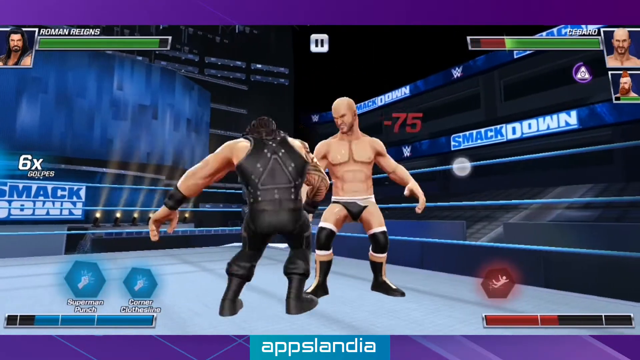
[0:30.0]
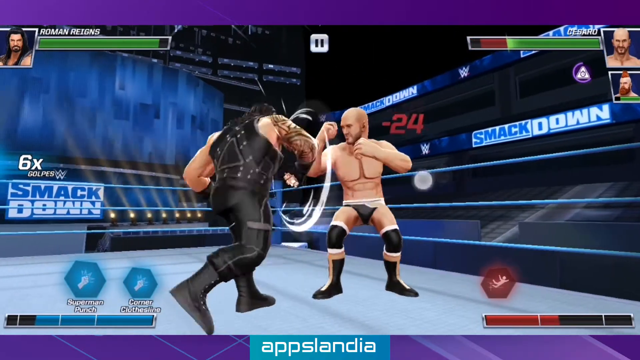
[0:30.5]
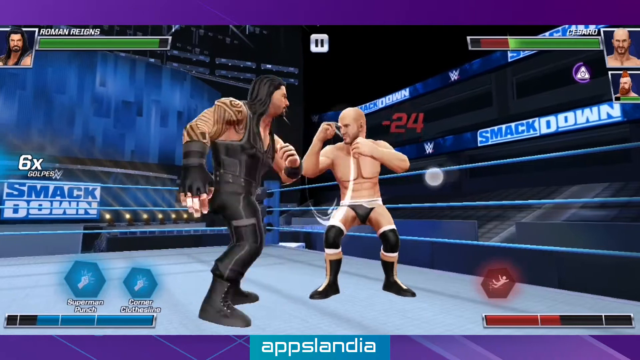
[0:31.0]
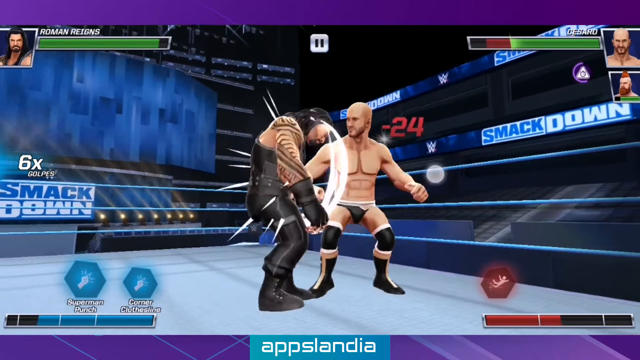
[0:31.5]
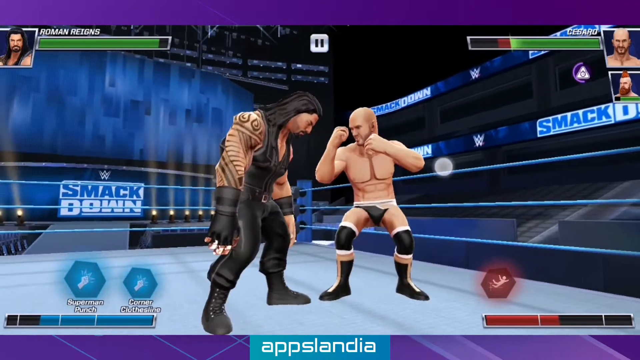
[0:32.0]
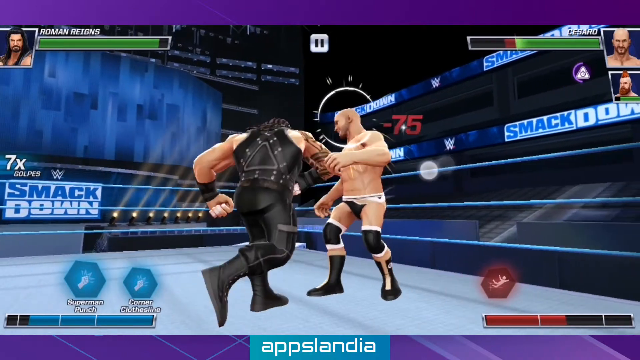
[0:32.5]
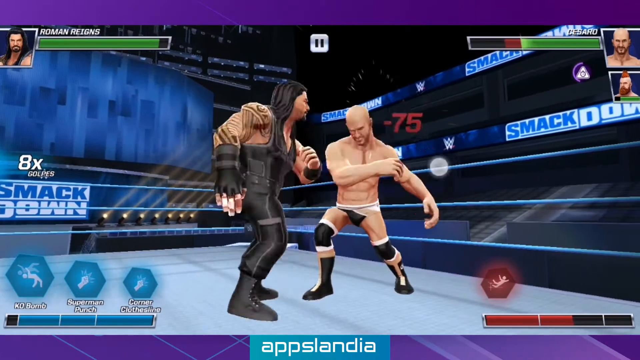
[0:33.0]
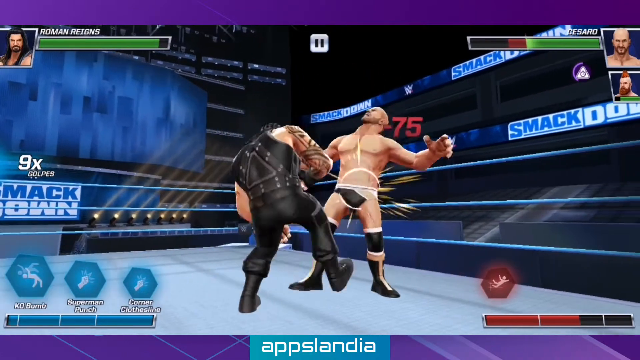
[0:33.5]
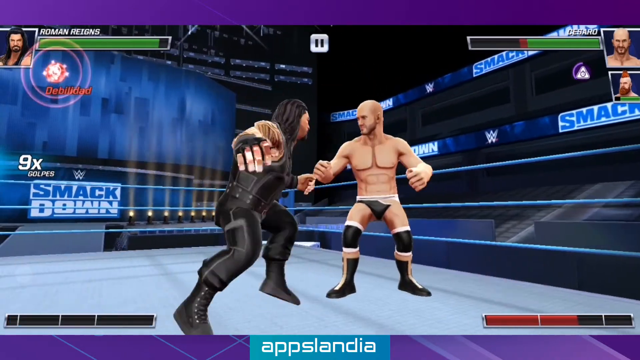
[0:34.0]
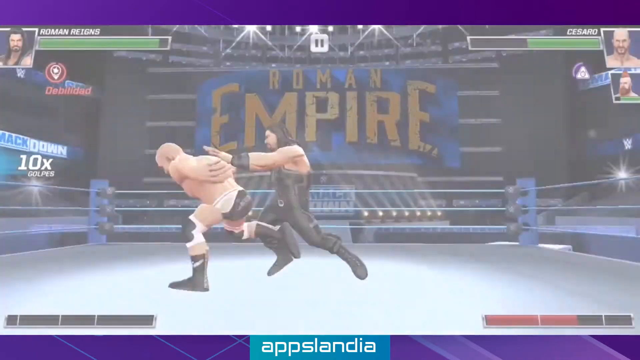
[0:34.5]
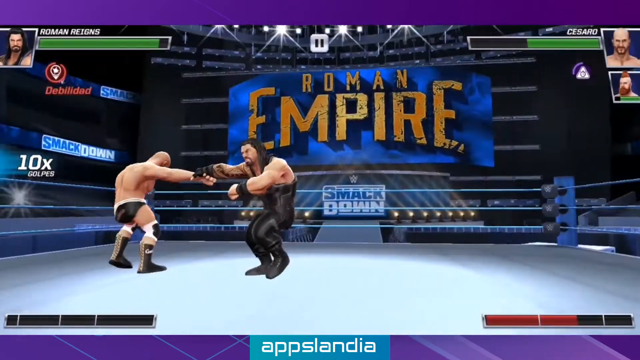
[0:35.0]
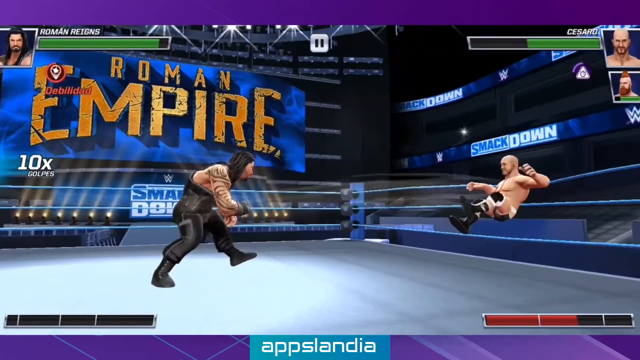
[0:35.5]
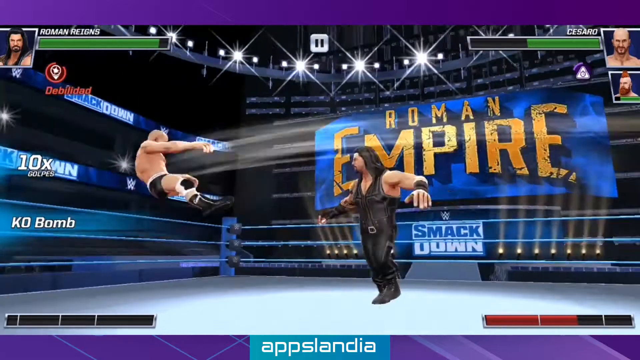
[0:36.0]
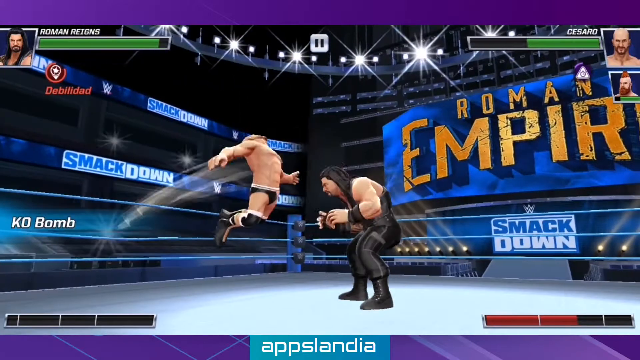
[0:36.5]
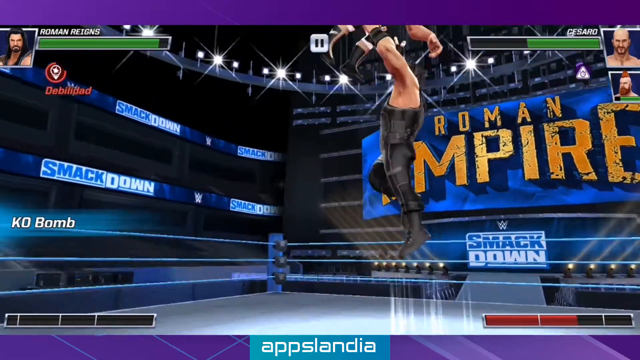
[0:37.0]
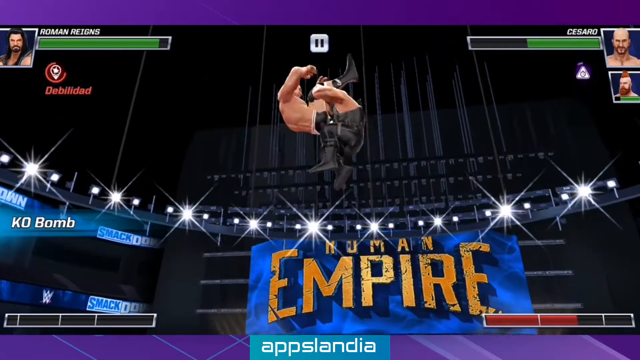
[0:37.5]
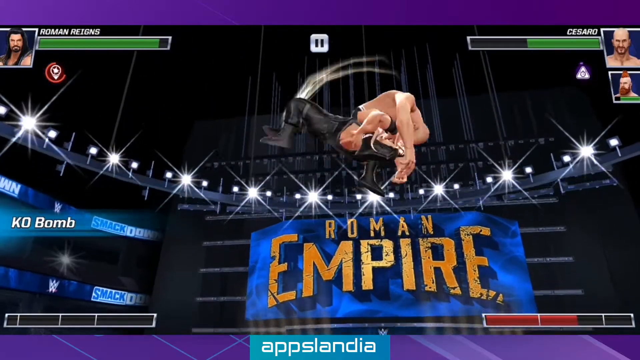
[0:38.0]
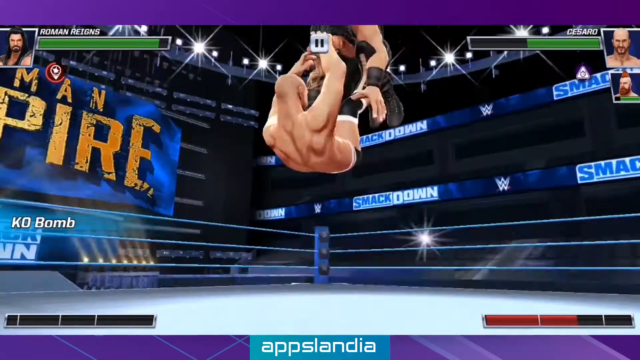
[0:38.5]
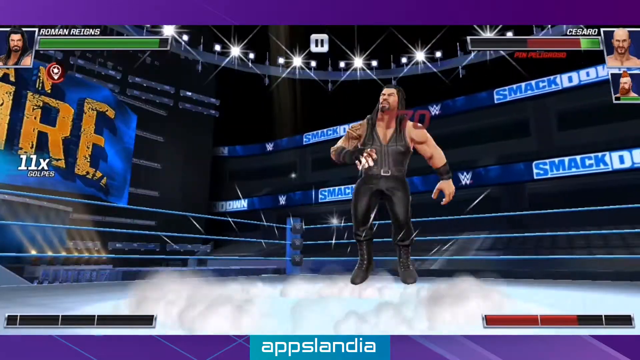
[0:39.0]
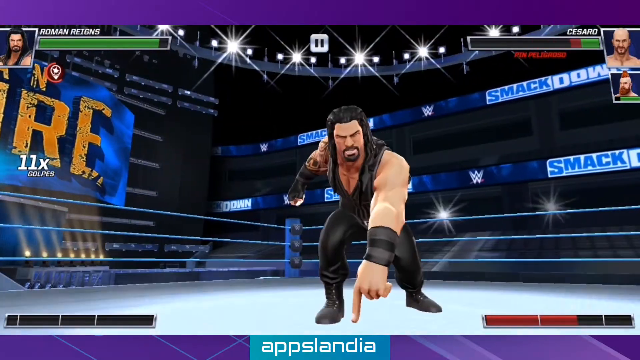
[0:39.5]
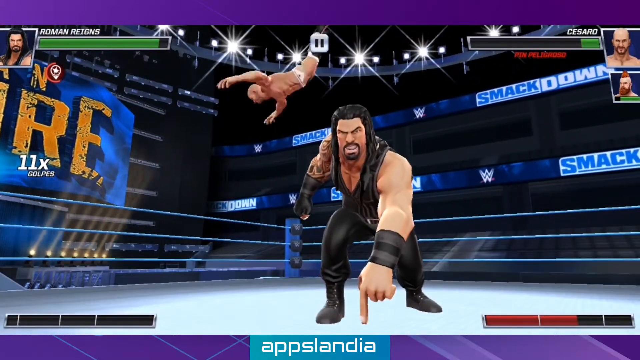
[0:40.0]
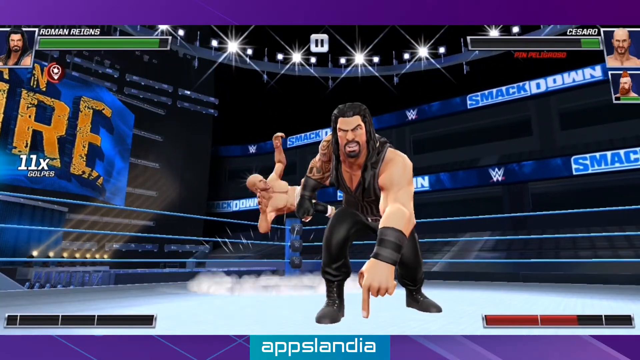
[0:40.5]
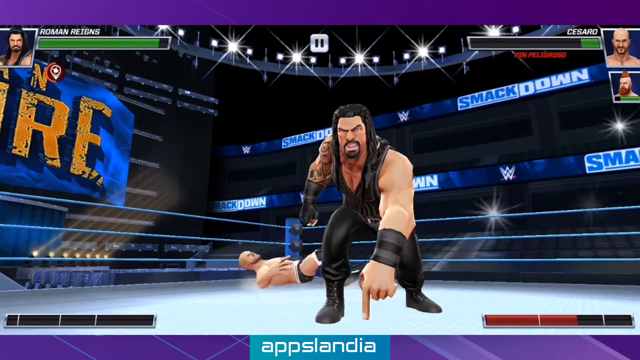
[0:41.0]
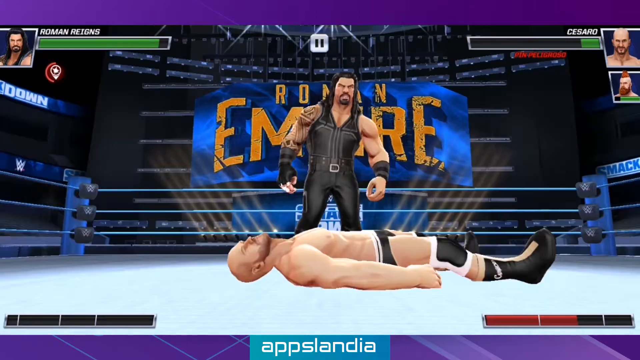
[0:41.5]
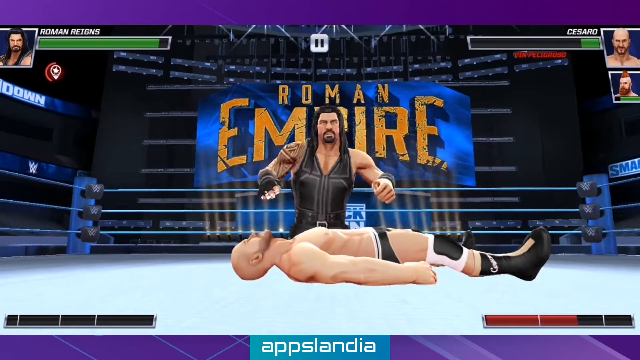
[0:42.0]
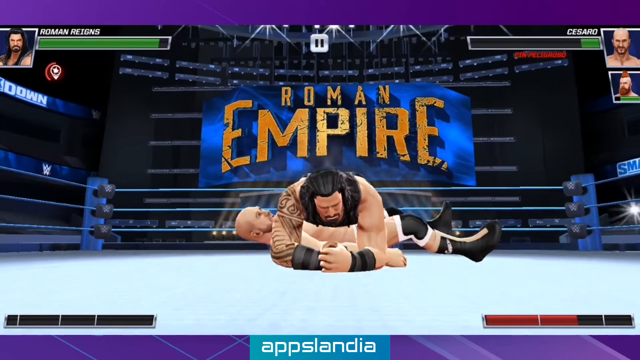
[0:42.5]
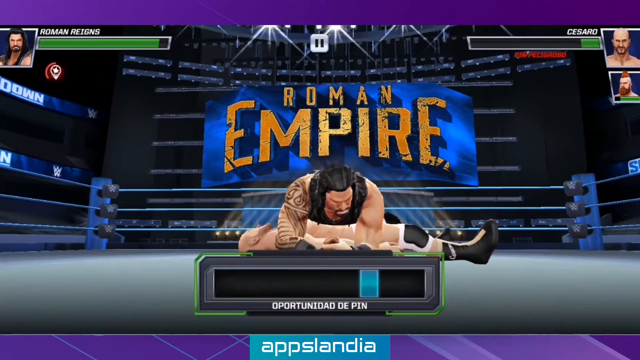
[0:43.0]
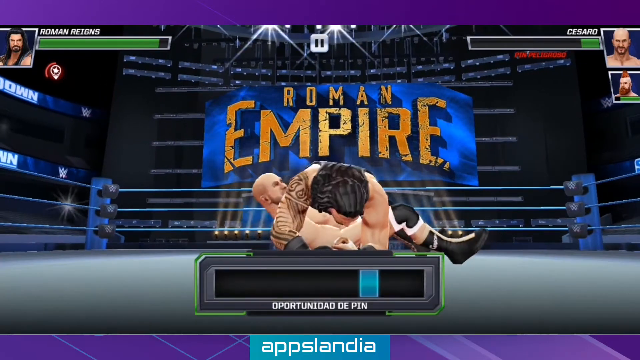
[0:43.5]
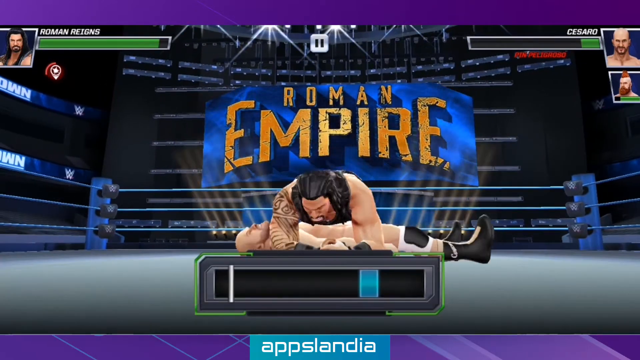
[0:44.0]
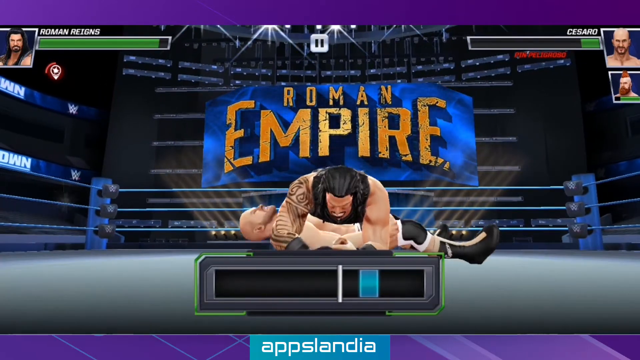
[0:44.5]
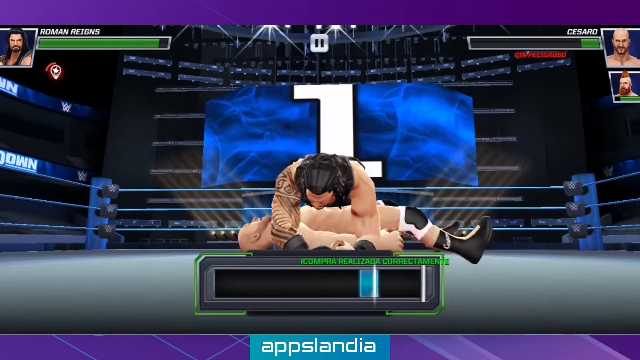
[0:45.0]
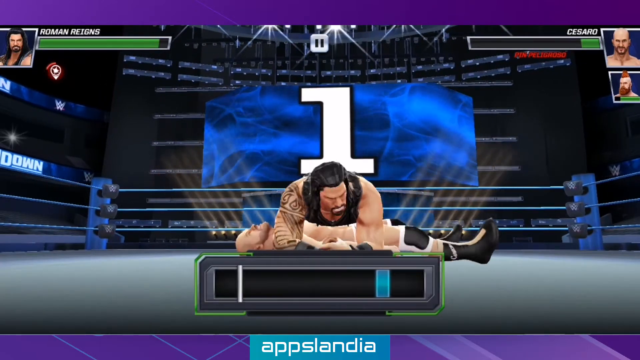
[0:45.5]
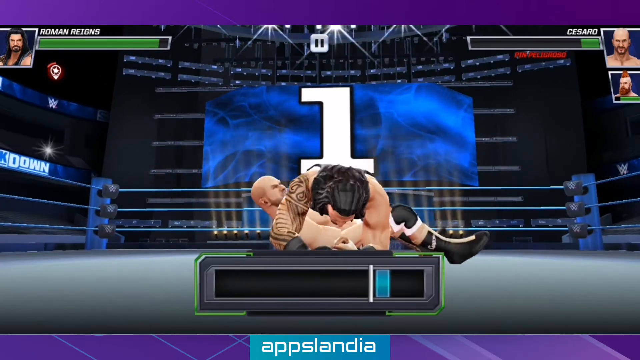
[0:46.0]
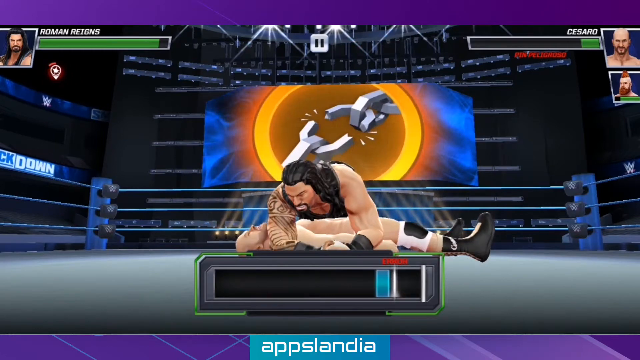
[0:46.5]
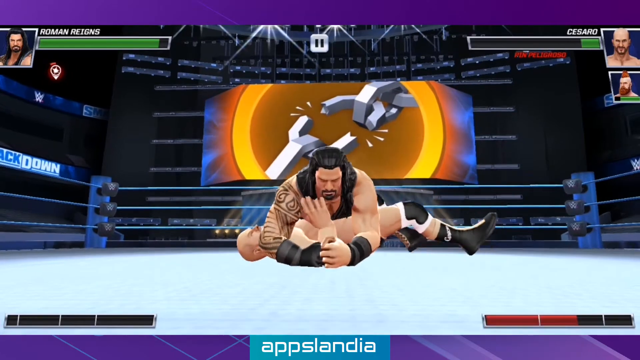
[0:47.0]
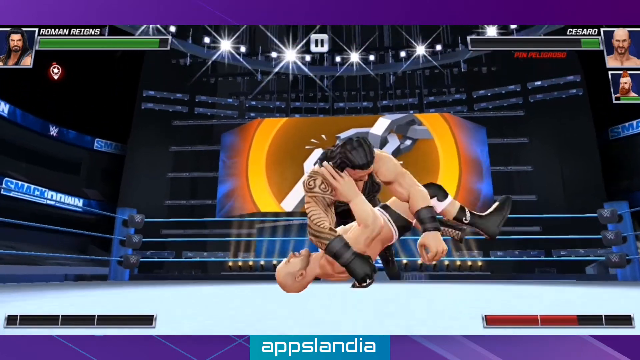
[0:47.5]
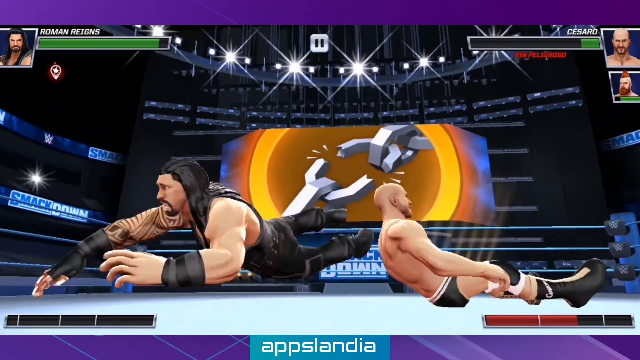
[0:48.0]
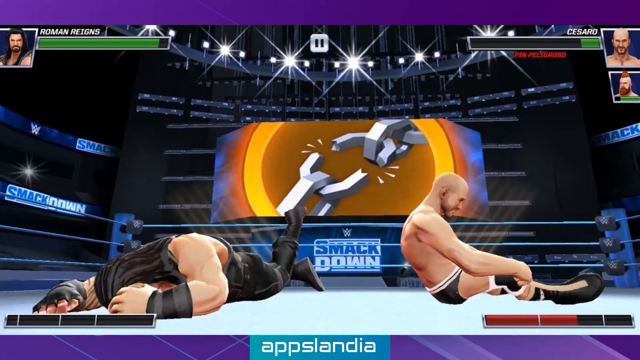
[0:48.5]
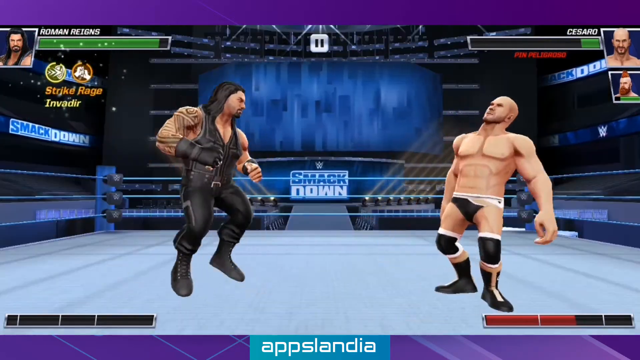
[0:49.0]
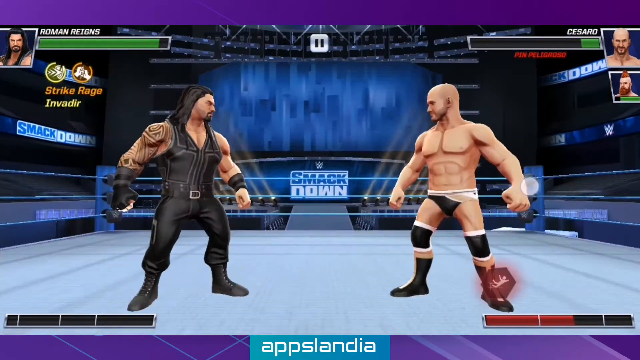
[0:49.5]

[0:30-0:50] The wrestling match continues, and player one looks to be winning, throwing the opponents and slamming them down. Player one gets an opponent on the ground and tries to pin him, but he survives, though he looks to be in critical condition and about to be knocked out. Player two's first wrestler looks about to lose. Hardly anyone is visible in the audience. "SmackDown" appears on the sides of the arena, apparently WWE SmackDown or possibly WWE Raw. The graphics do not look very good.